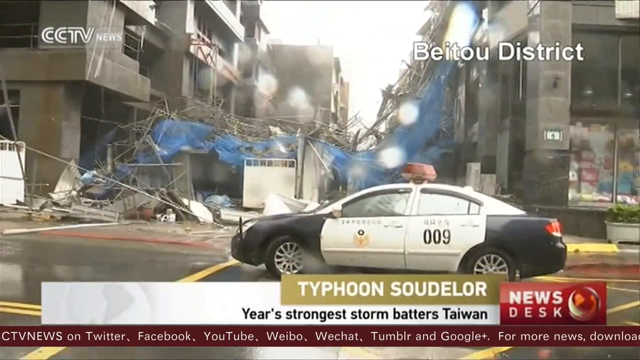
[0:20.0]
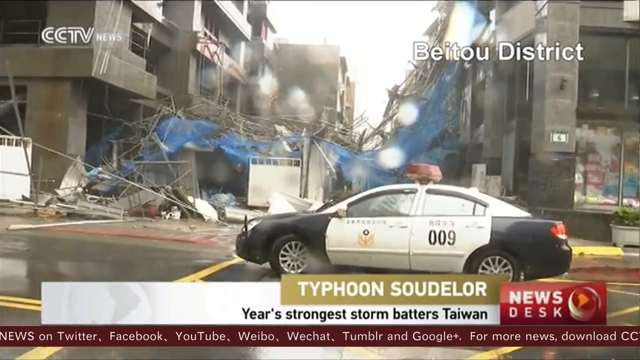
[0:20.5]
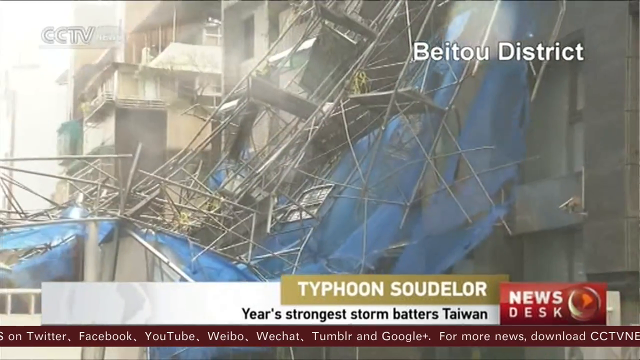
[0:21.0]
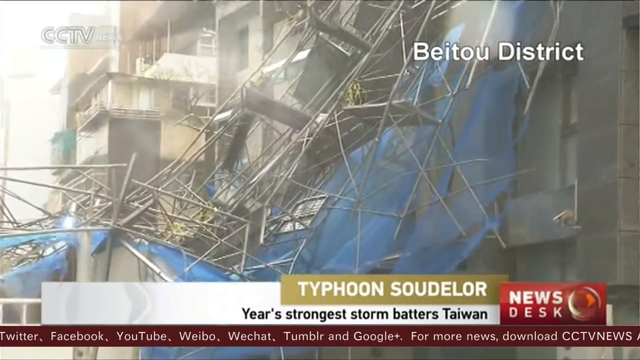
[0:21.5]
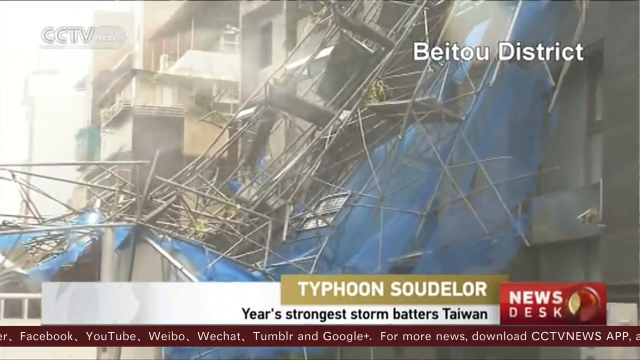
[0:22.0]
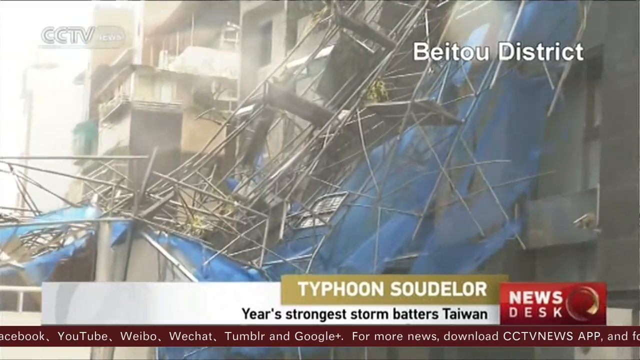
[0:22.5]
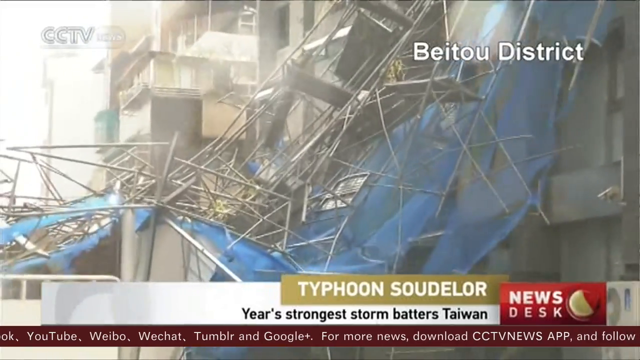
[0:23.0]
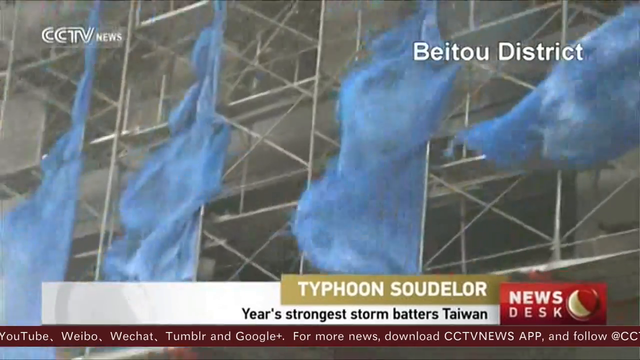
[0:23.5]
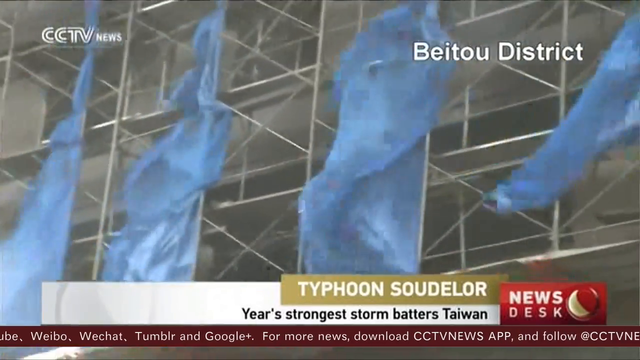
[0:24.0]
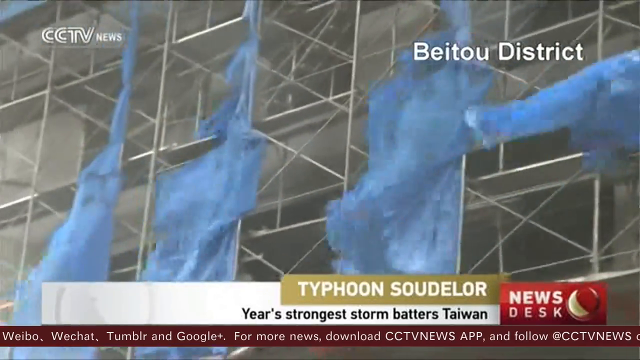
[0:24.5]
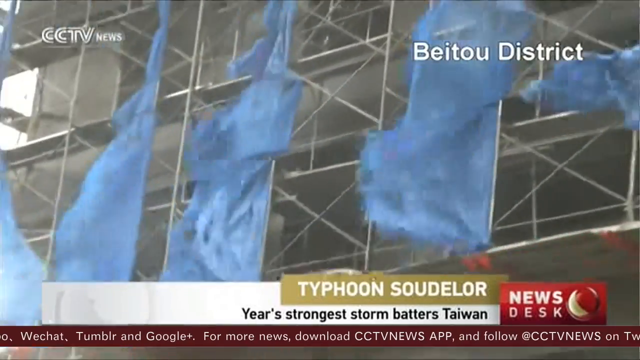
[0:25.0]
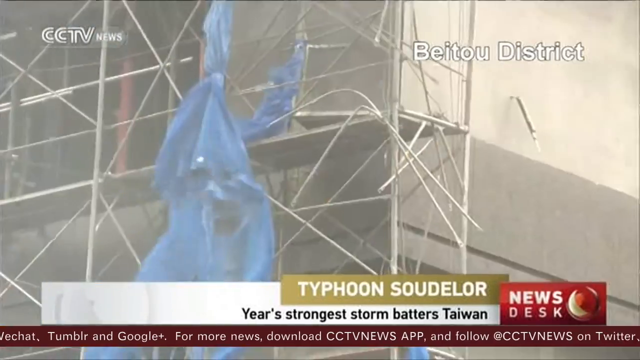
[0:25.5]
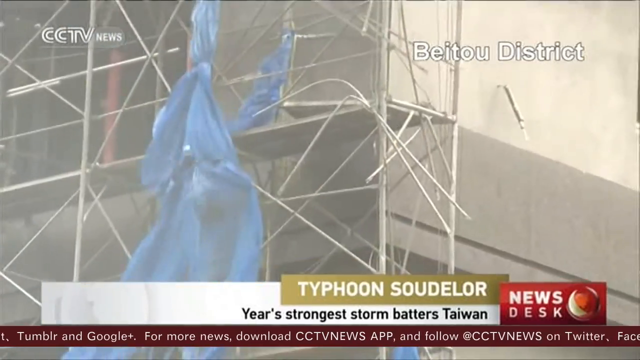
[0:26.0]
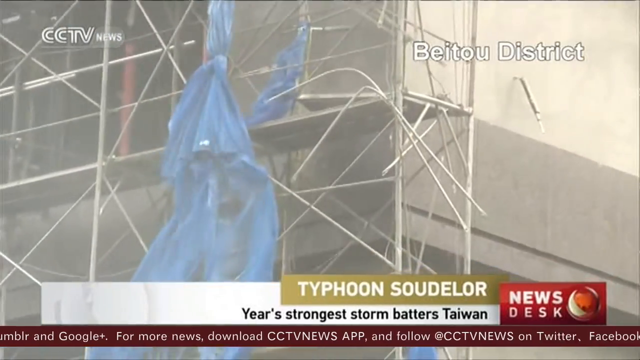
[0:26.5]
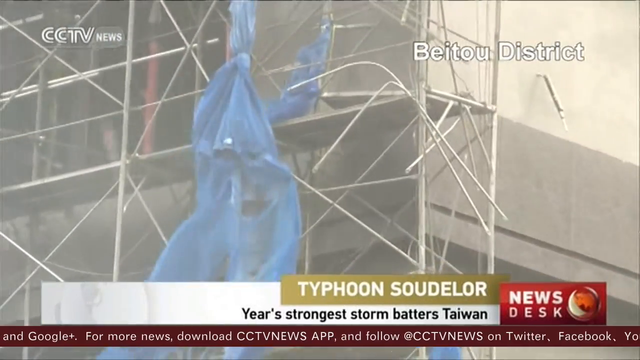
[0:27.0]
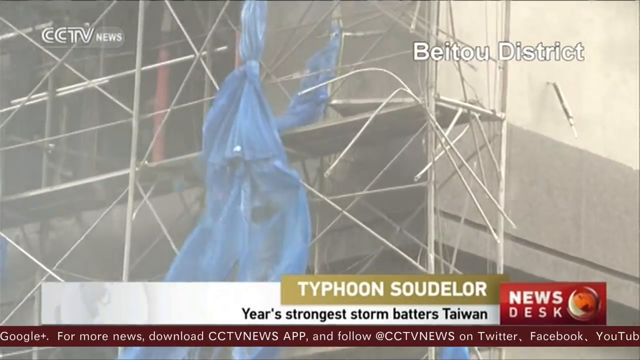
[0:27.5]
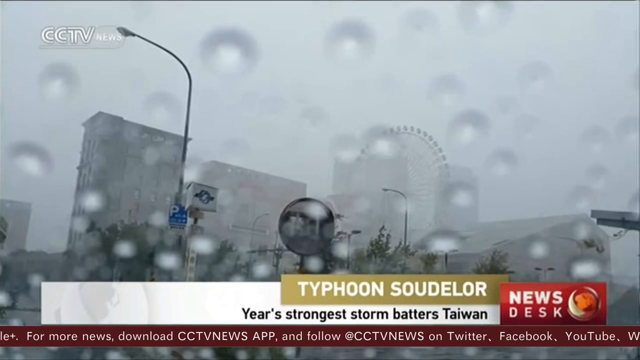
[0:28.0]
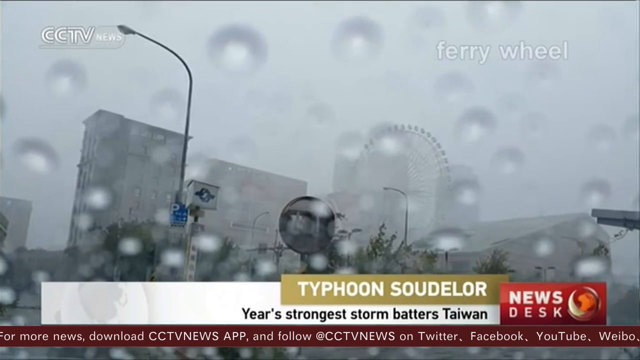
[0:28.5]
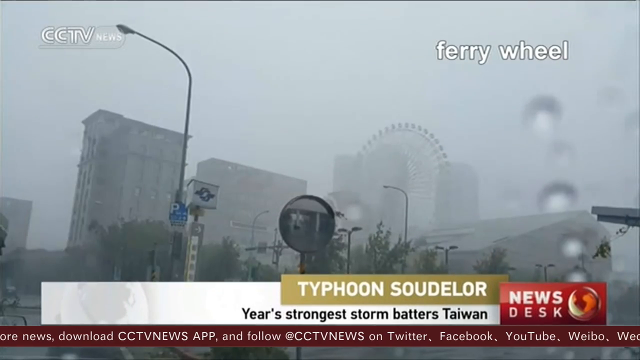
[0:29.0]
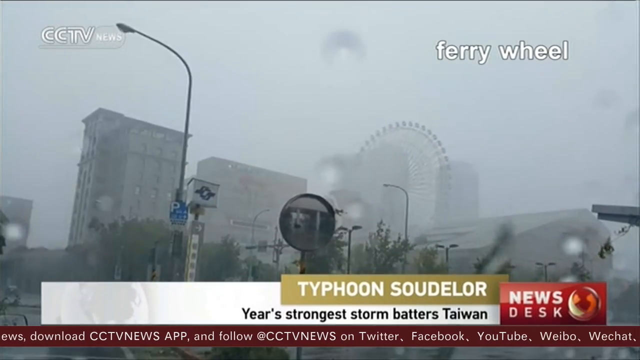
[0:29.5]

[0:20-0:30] The destruction from the strong typhoon continues.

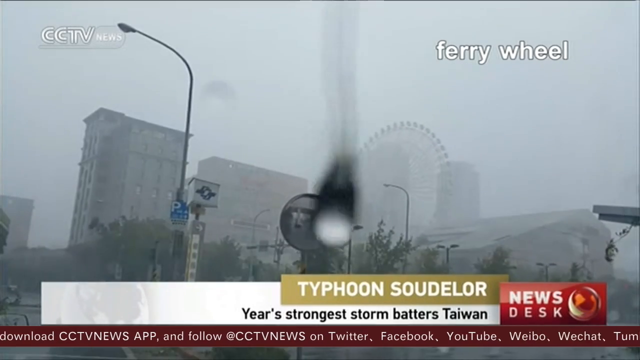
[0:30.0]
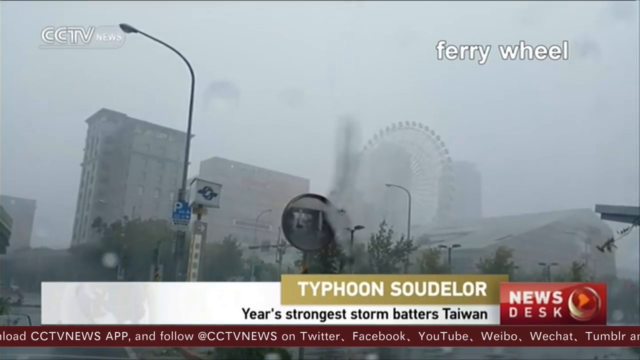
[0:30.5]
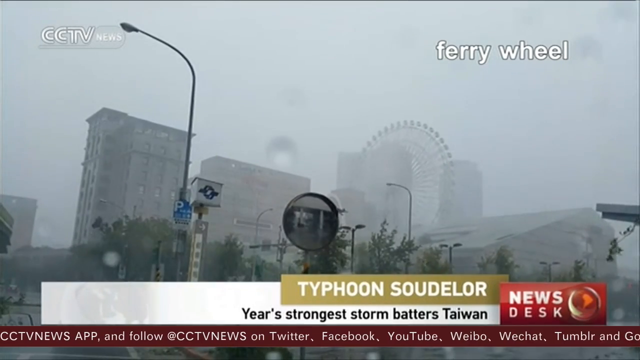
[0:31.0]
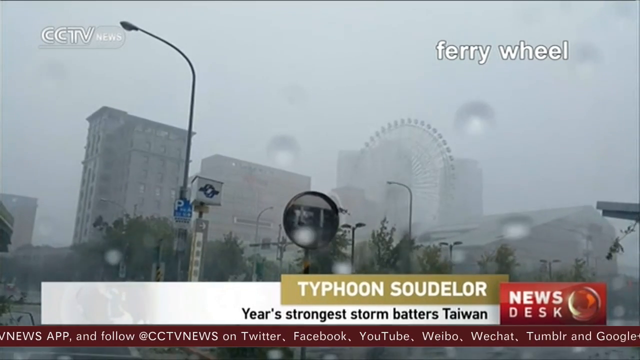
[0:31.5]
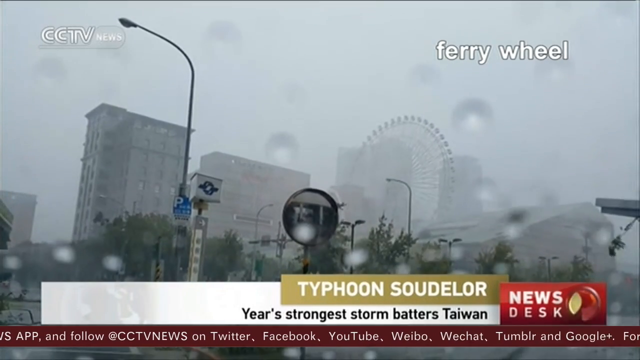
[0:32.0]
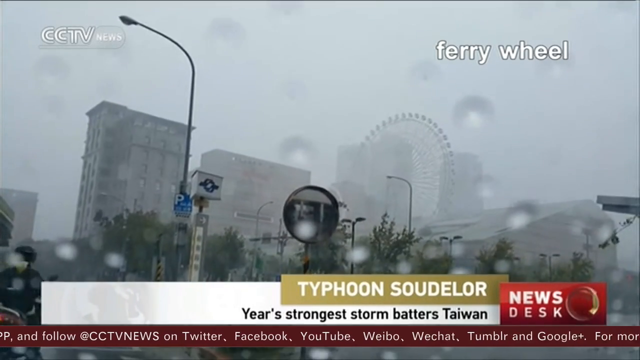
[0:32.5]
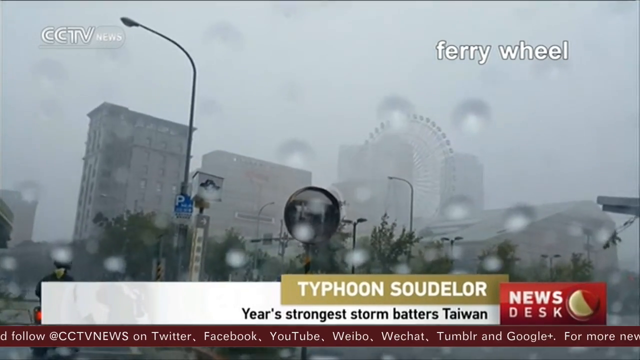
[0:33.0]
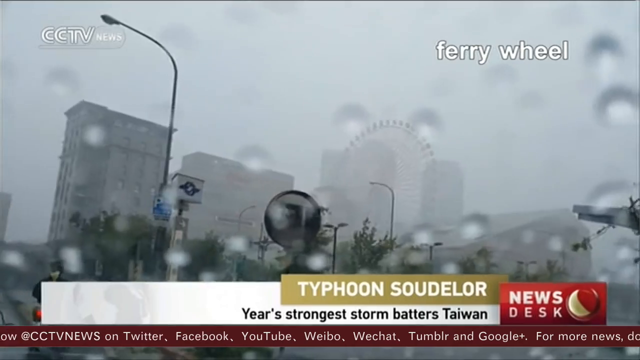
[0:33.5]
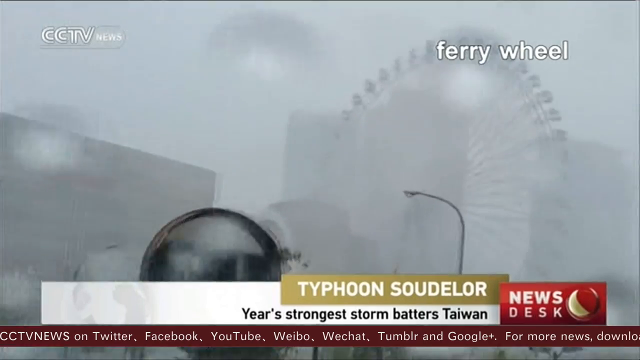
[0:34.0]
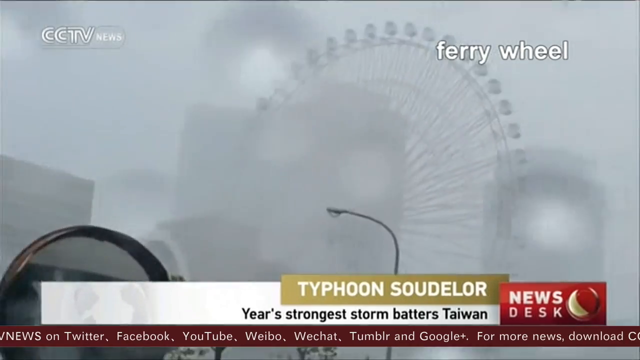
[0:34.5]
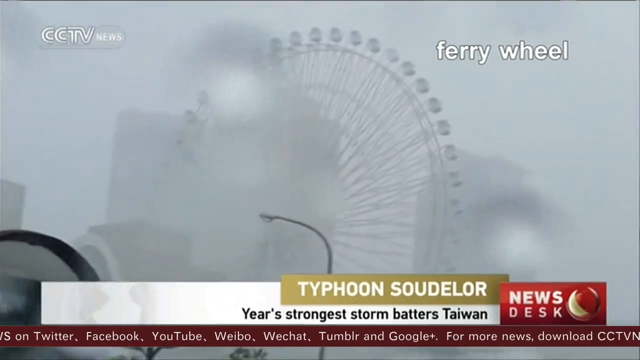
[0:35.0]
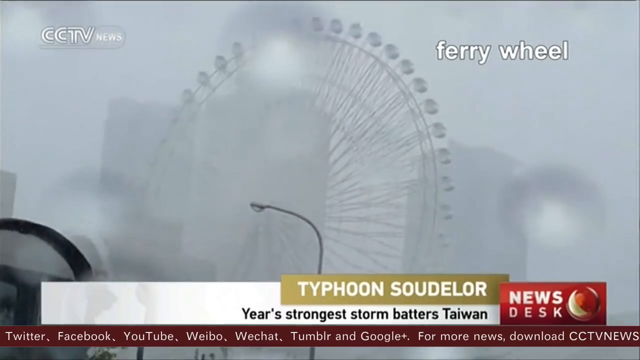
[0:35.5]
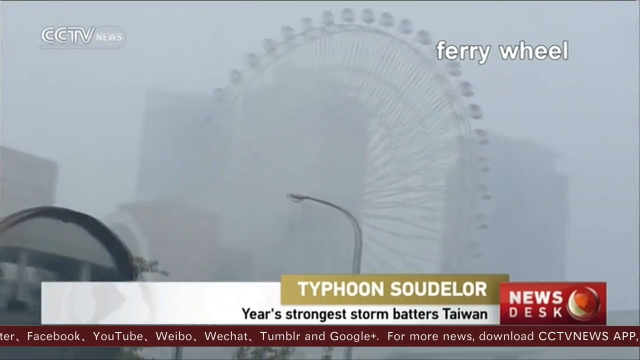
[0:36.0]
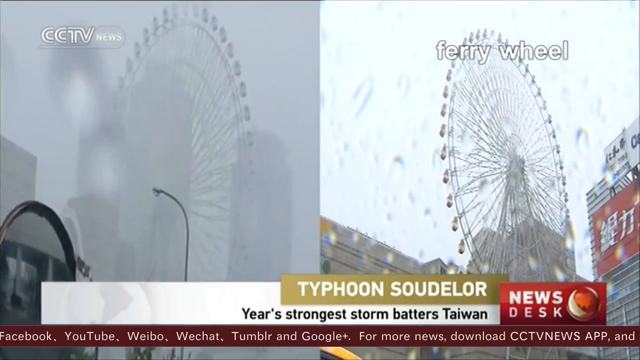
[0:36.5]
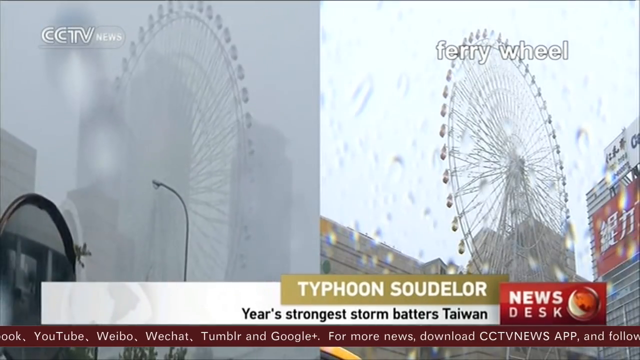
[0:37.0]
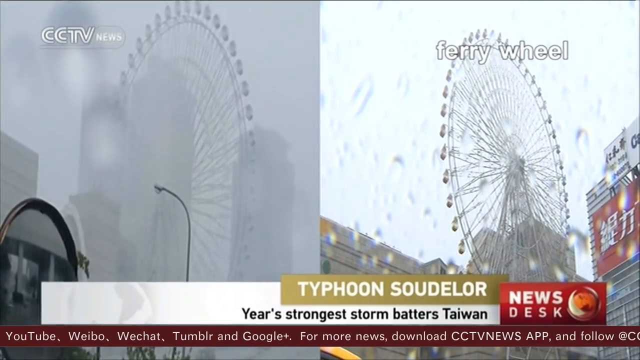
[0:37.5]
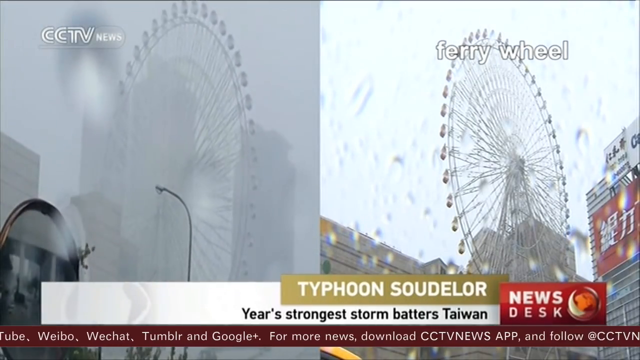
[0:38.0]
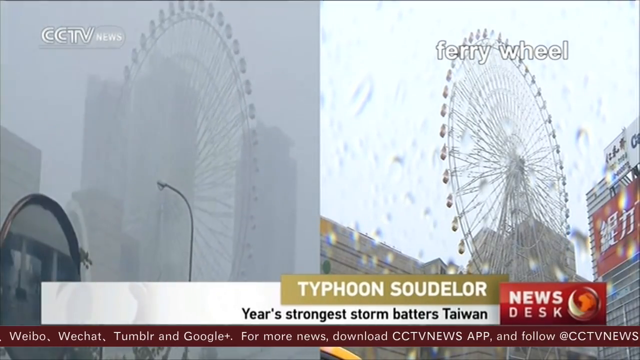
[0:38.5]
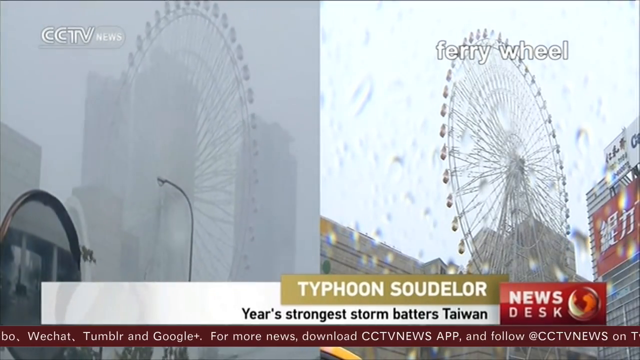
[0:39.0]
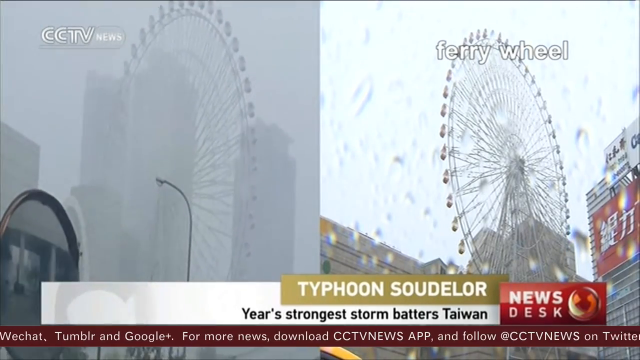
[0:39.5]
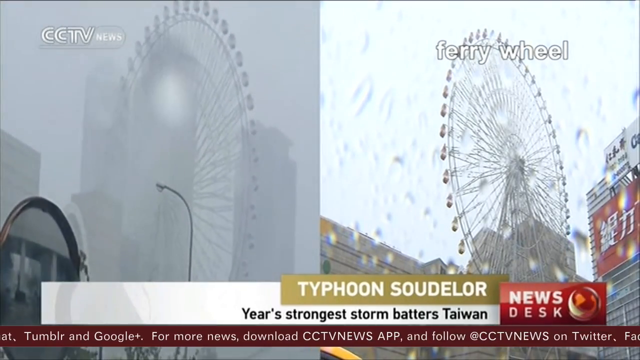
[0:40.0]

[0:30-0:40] The typhoon's destruction is widespread, bringing down trees and mansions. Police and other agents are working to bring the situation under control.